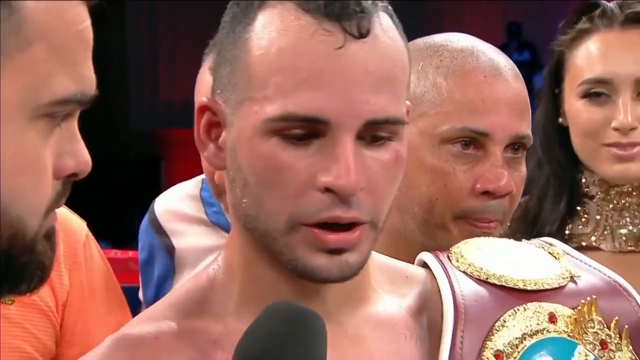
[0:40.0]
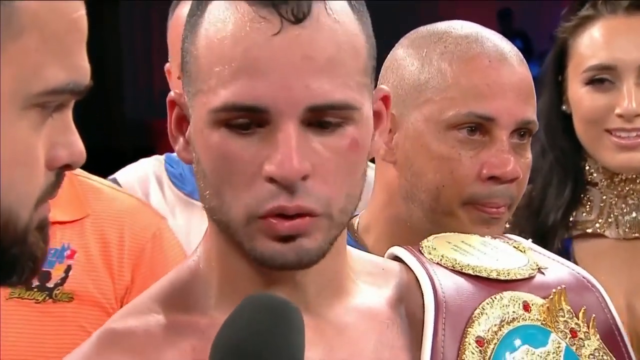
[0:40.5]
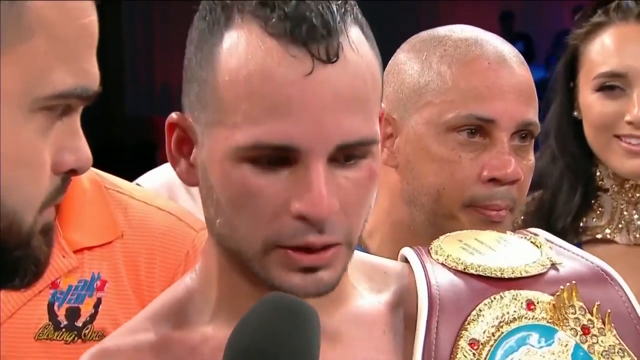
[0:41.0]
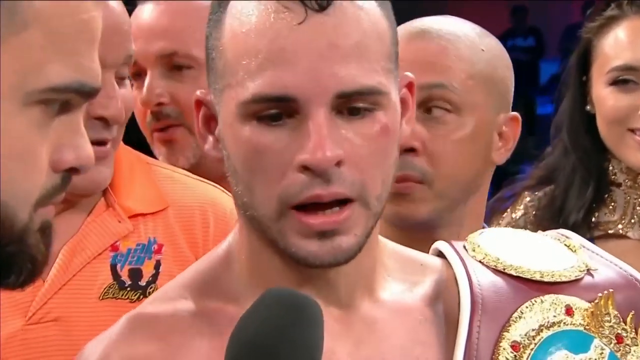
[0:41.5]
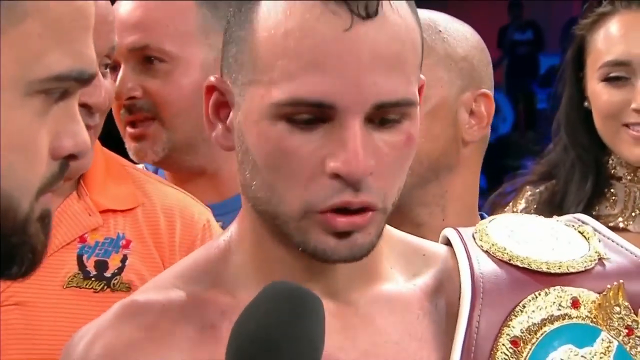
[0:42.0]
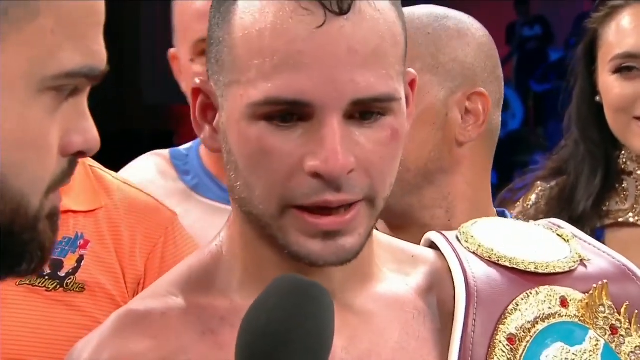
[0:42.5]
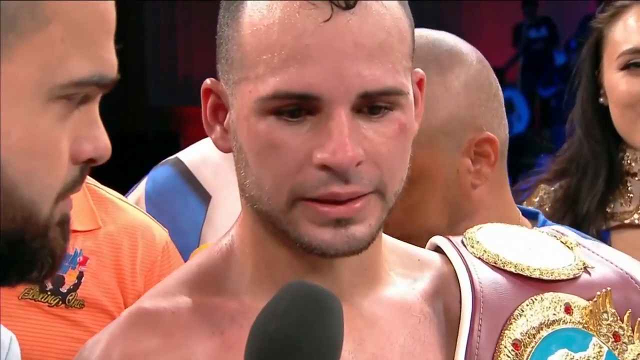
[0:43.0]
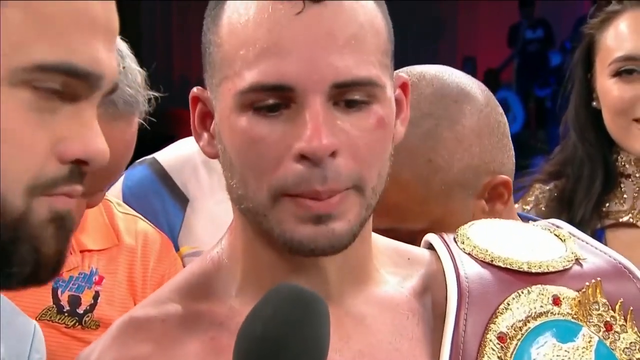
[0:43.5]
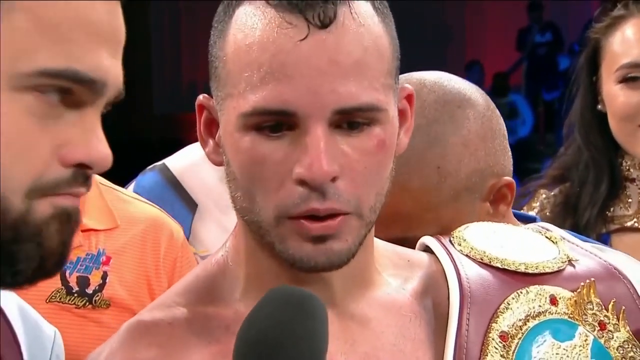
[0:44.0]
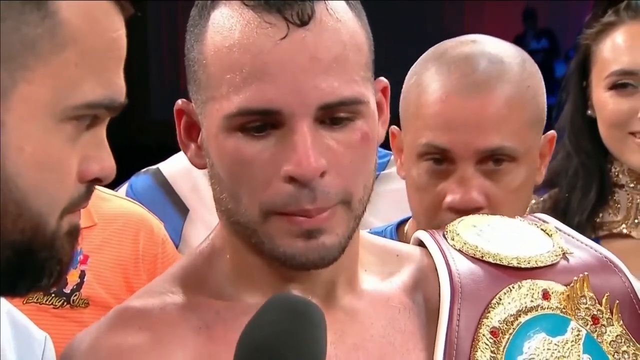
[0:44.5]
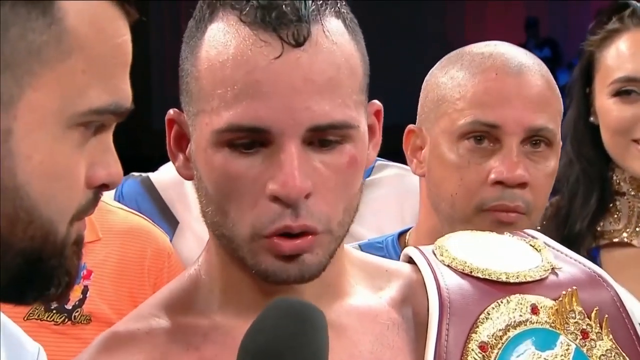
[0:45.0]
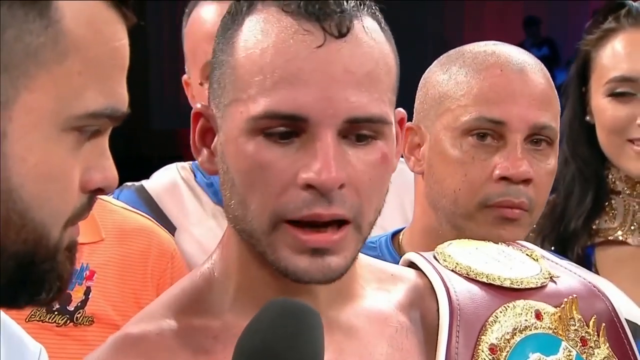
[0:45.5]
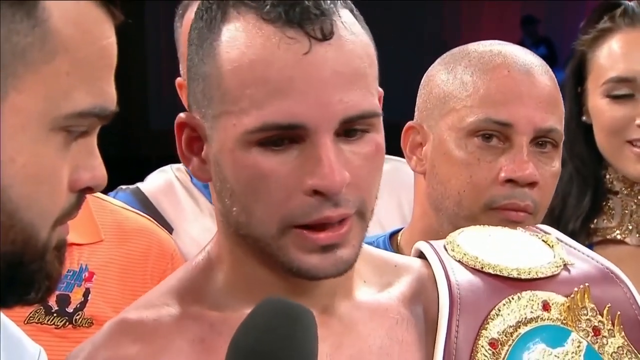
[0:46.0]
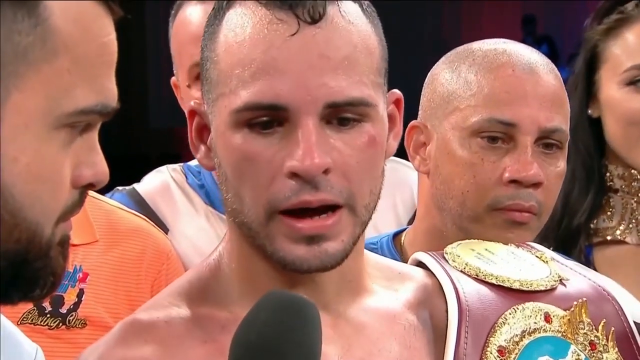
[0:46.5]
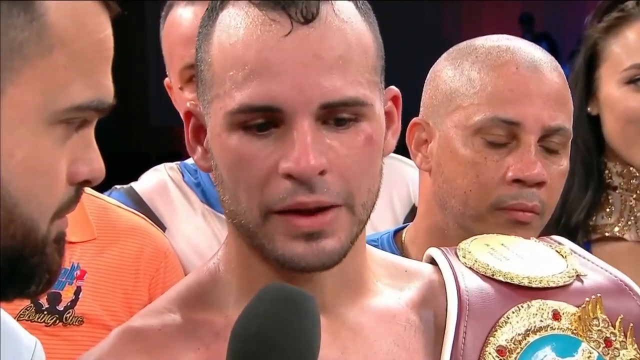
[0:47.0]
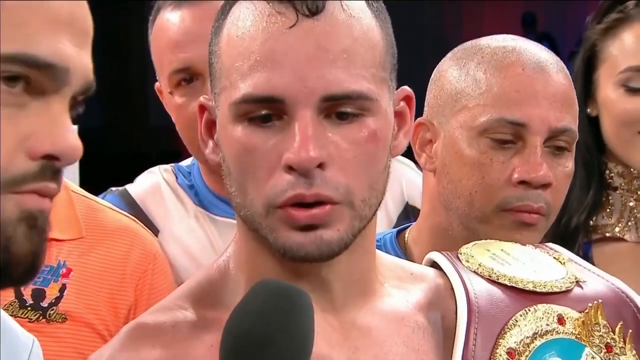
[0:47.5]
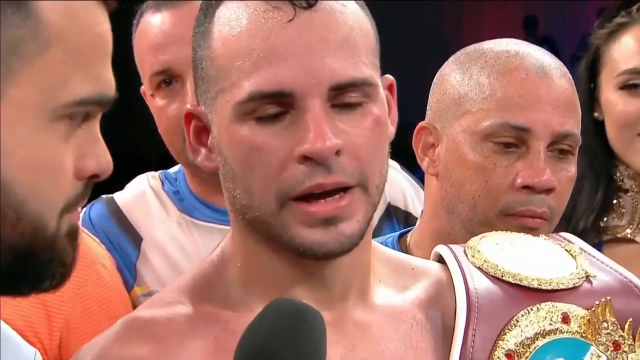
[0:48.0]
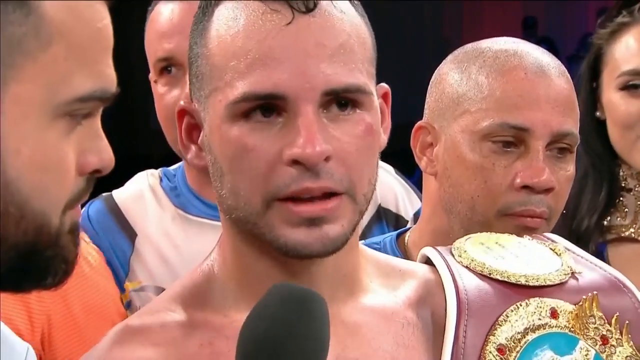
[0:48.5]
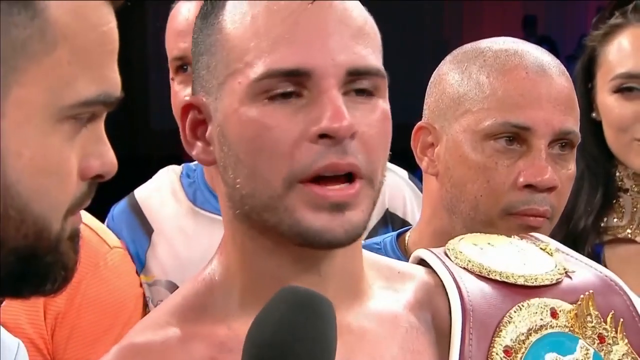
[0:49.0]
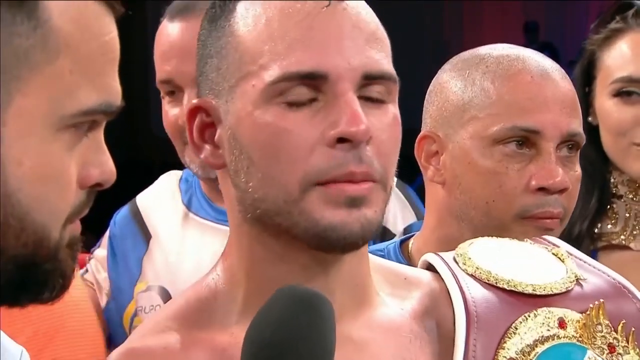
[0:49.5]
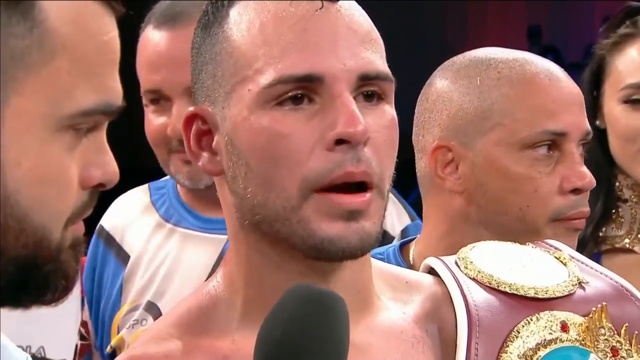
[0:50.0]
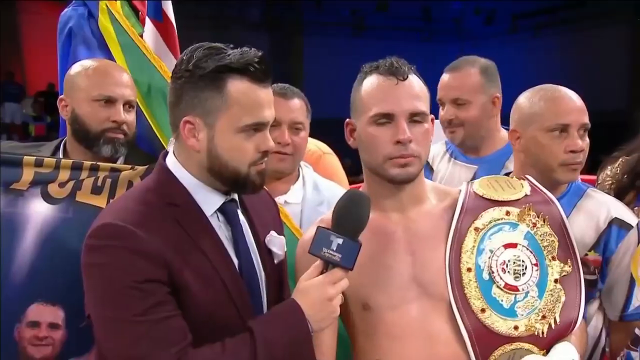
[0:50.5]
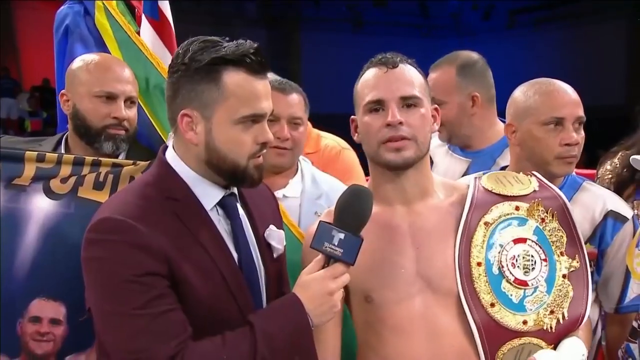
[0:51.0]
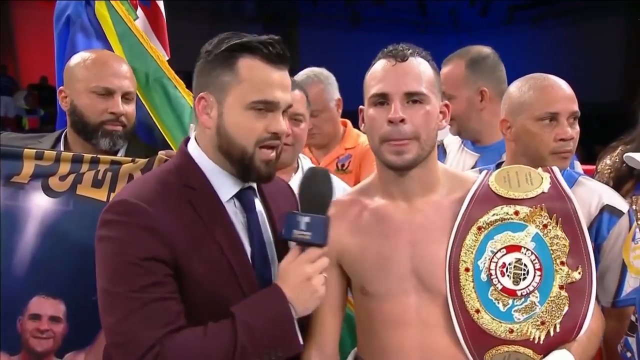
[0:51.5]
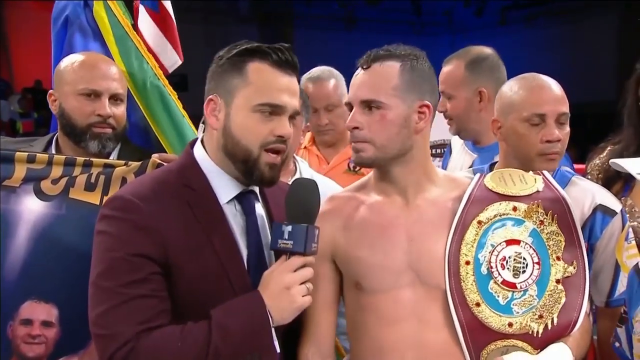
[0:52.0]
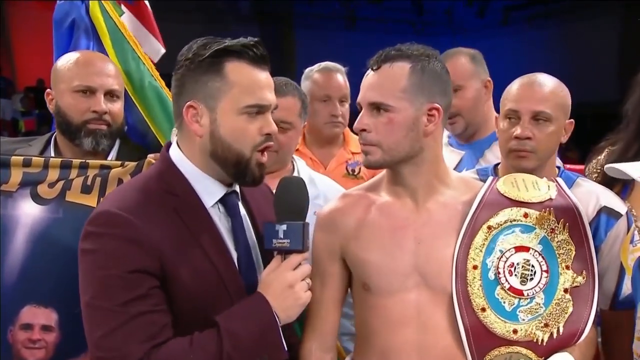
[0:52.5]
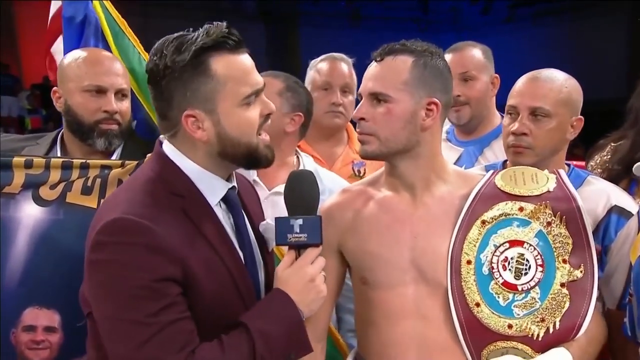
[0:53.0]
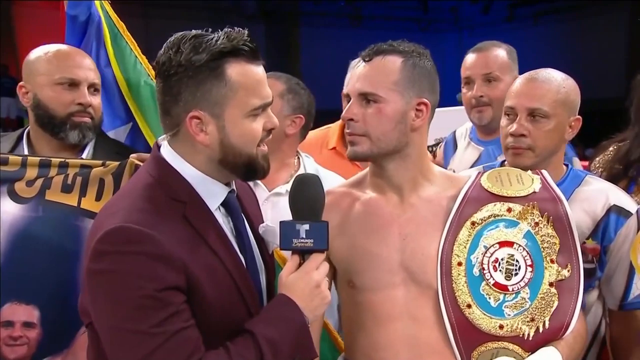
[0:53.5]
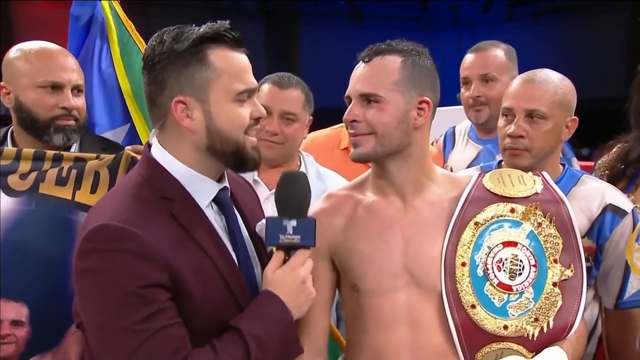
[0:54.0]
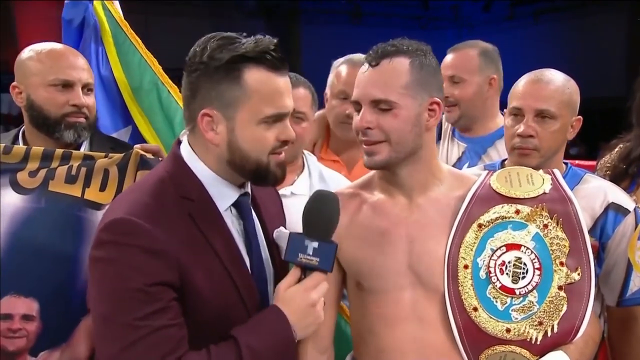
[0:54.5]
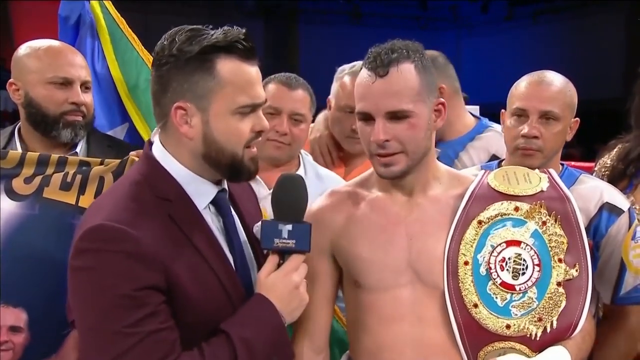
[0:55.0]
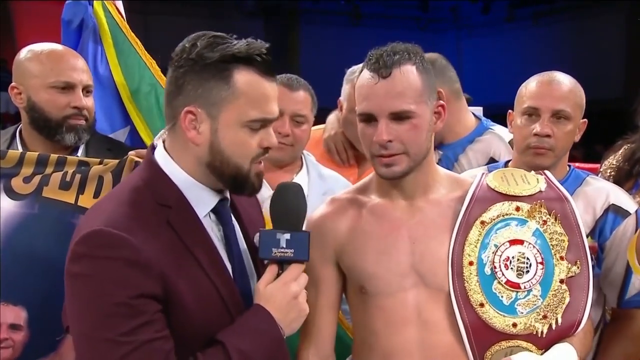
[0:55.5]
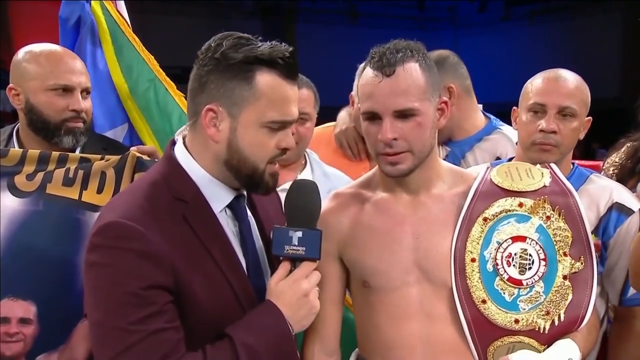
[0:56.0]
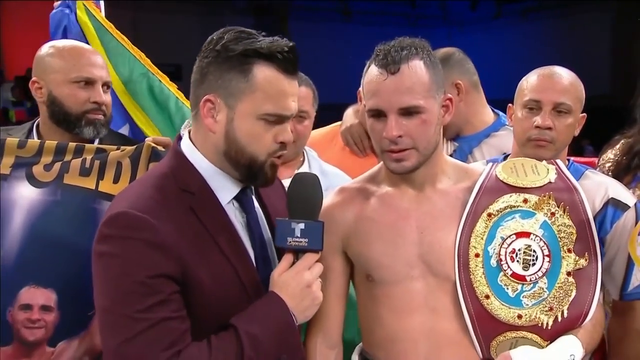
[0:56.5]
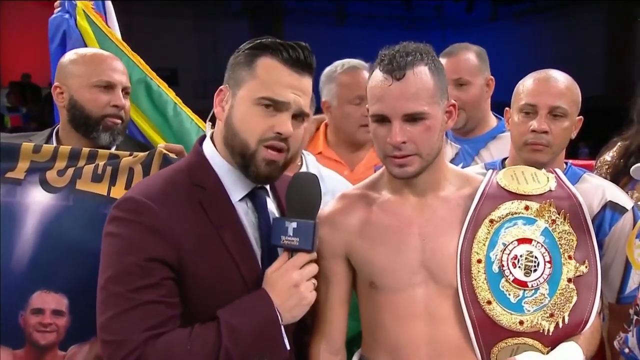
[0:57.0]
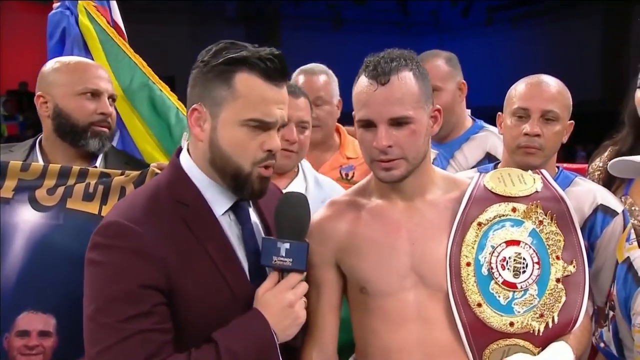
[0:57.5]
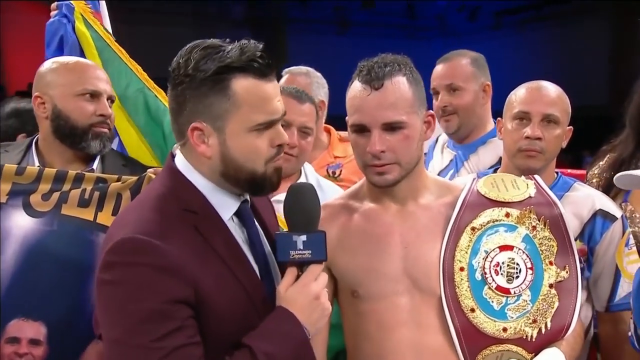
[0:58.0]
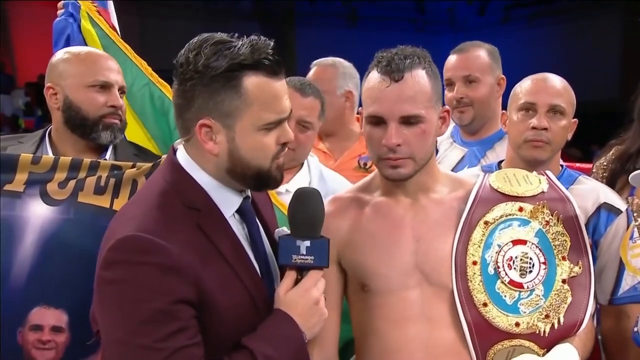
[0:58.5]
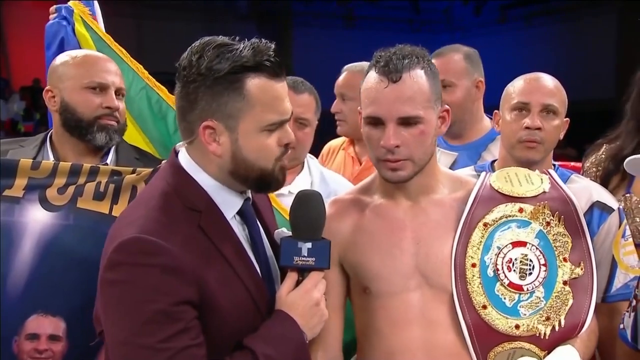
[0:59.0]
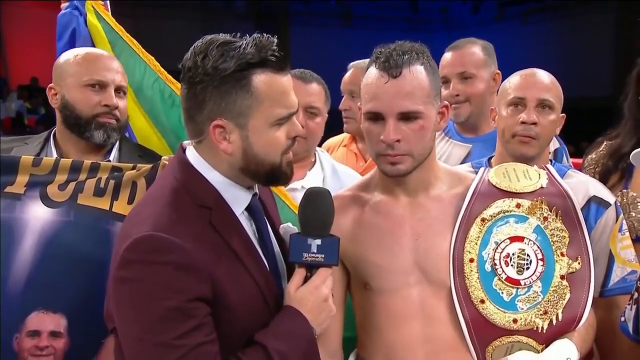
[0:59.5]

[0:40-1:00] The shot is more of a close-up, with less of the interviewer showing on the left side of the screen. Behind him are the shoulder, collar and a badge on the chest of another man, and an orange shirt is visible. There is a white shirt with blue trim. The boxer is dead center of the screen, and most of the head of the microphone is in the foreground. Over his left shoulder is the bald-headed man, with the blue of his top just visible at the base of his neck. The title belt is still over the boxer's left shoulder. The smiling young woman is visible down the right-hand side of the screen from top to bottom; the belt covers most of the bottom corner, but her bare chest above her breasts, her gold collar, her hair and her smiling face are visible. The boxer speaks quite animatedly to the camera and the interviewer.